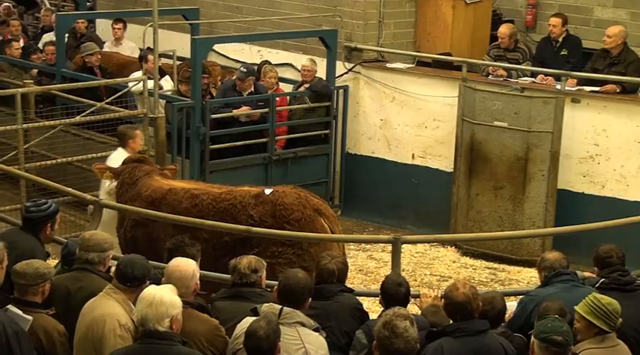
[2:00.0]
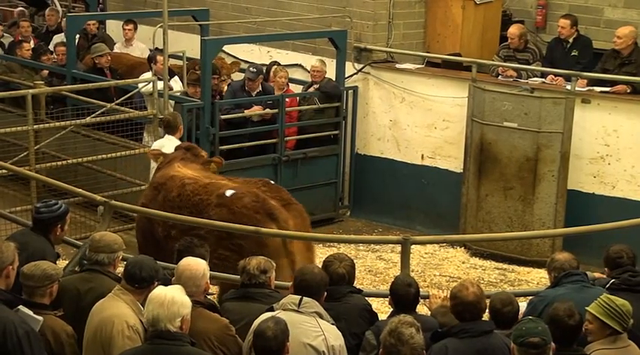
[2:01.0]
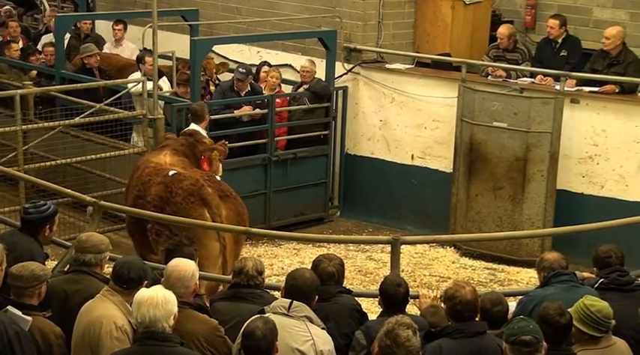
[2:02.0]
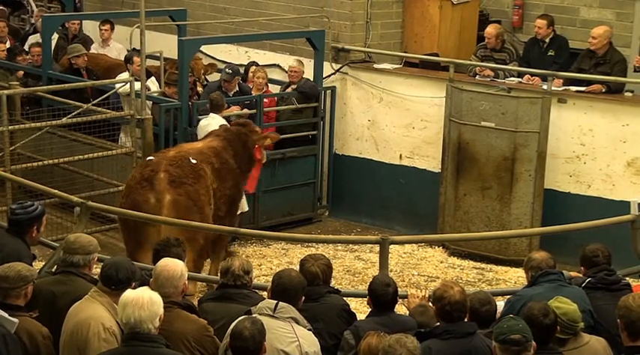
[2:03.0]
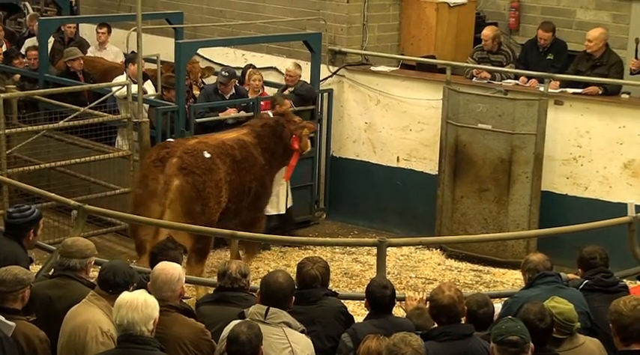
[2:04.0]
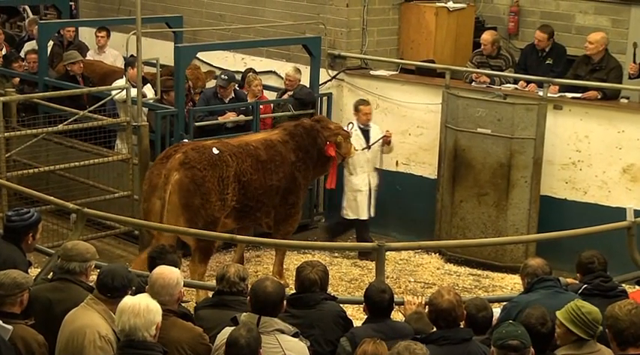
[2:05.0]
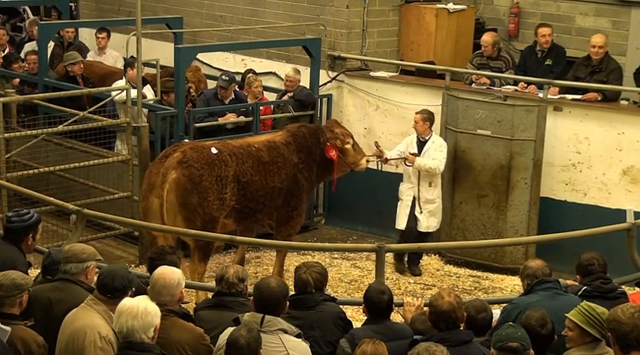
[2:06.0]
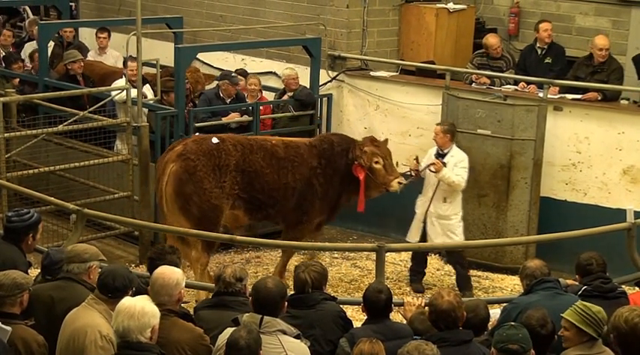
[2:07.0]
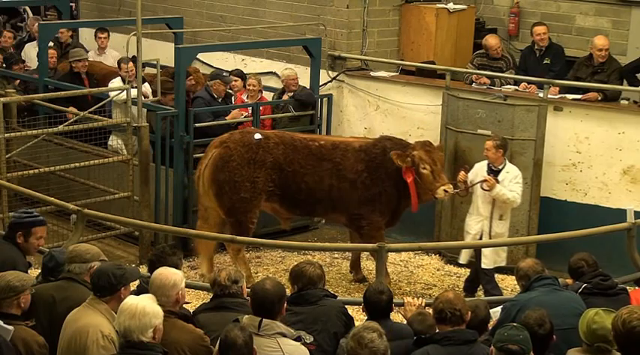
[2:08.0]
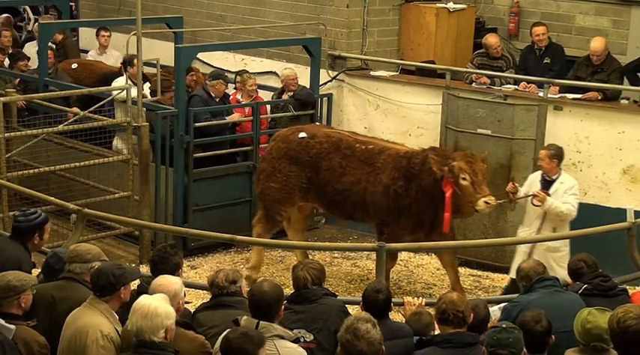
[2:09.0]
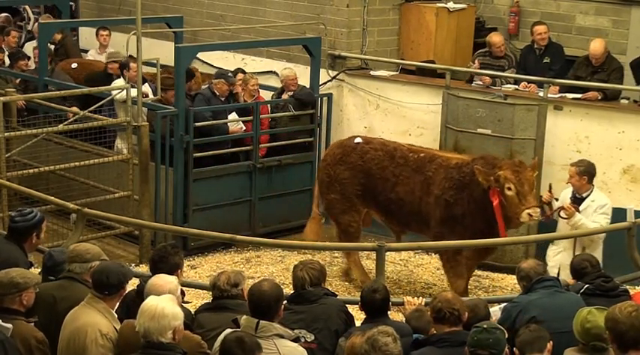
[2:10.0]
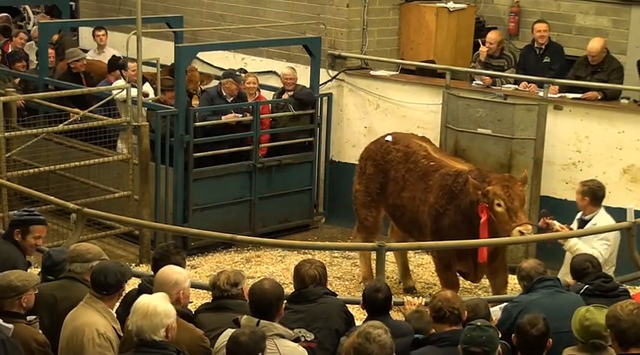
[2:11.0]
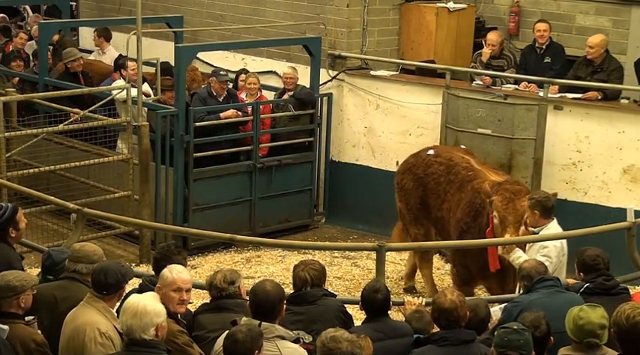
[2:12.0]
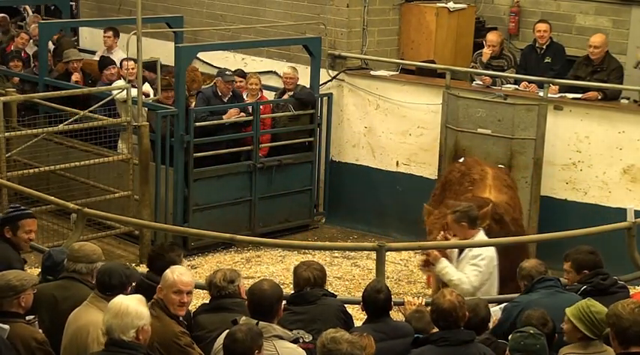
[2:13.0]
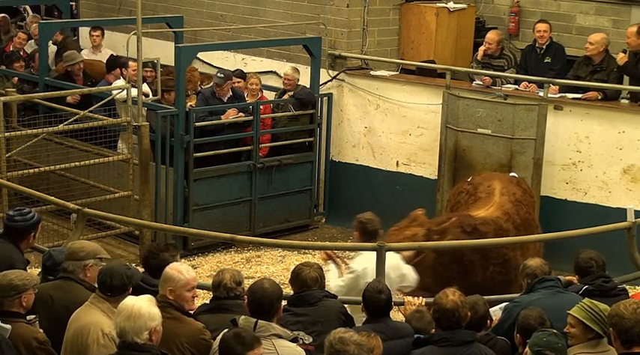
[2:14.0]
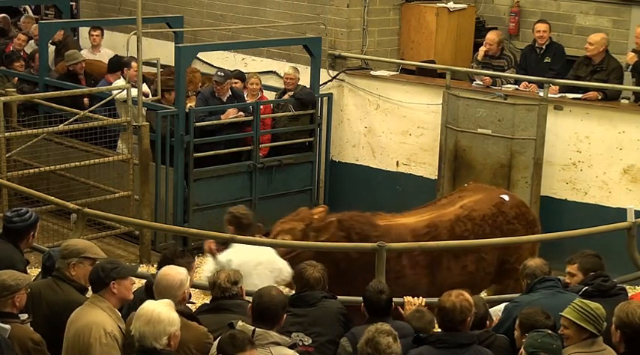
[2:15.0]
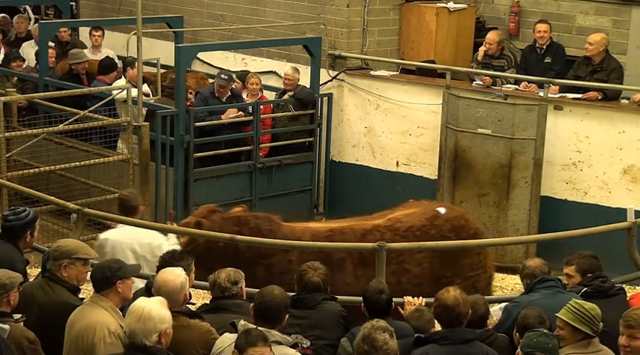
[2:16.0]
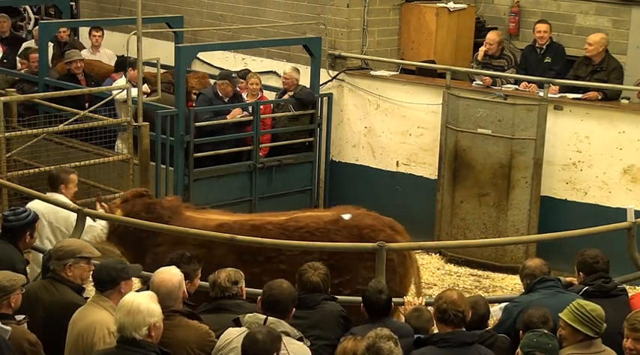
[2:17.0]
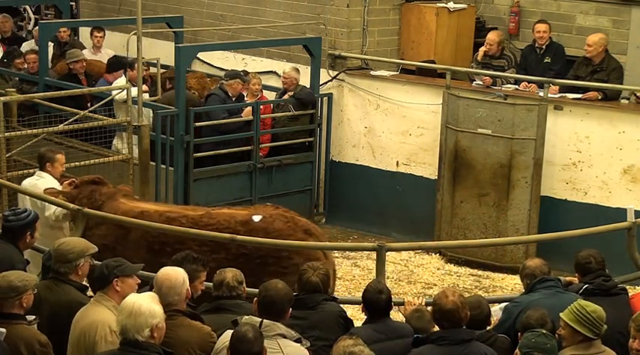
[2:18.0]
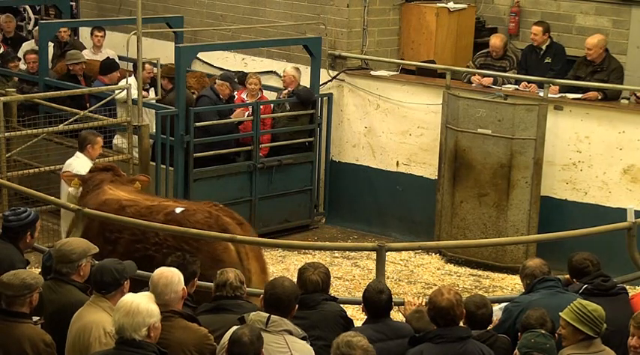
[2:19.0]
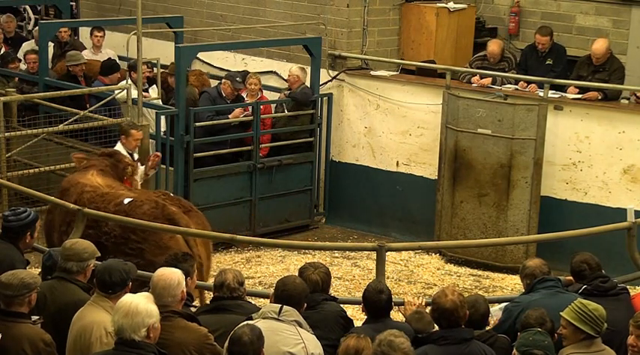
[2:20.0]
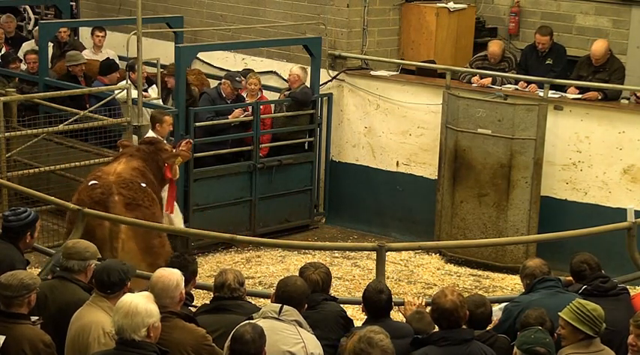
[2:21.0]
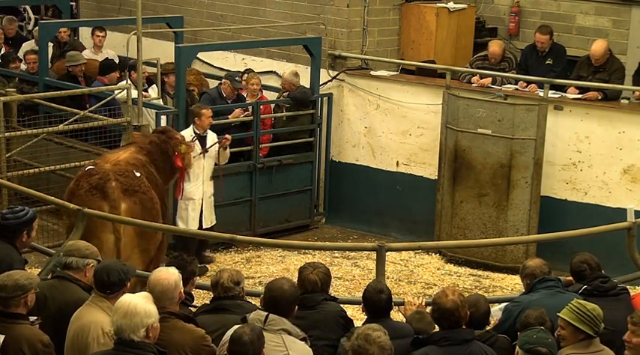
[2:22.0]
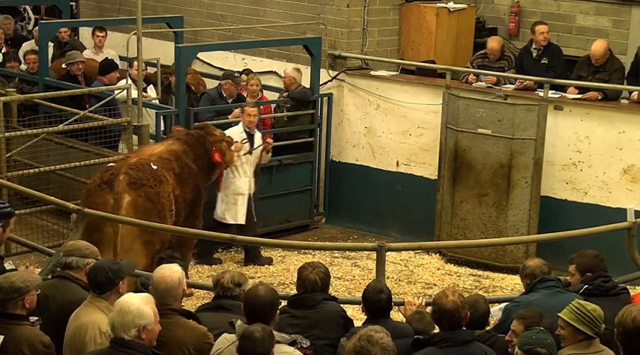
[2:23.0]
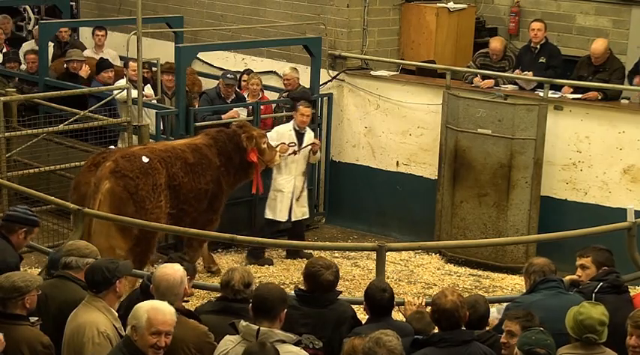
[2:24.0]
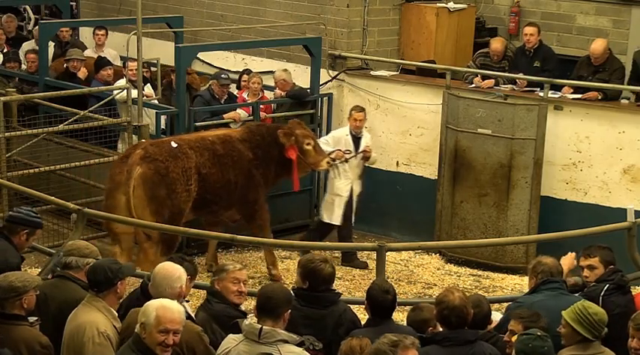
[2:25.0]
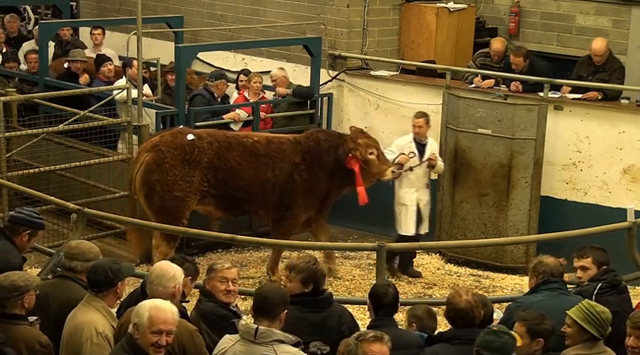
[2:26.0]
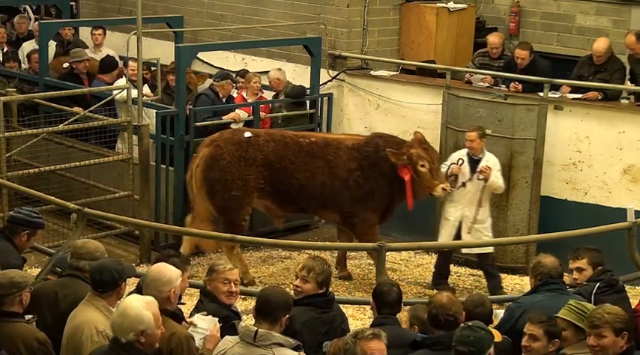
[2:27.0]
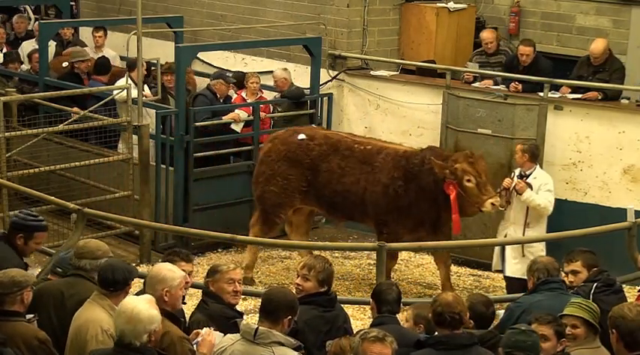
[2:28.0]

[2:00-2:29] The same cow is walked around in circles. Its tail twitches some, and it seems to pull back a little or walk more slowly. A red ribbon is attached to the right side of its head. It has two white things implanted in the tops of its haunches and a stripe of fur missing down its back. Only one man in a white coat leads it around. Up above, three men sit at a table; they may be judges or auctioneers, and the red ribbon may have come from them. Tons of spectators watch, wearing hats and coats, suggesting it is cold. The cow does not seem as energetic as earlier, but it cooperates and does not fight; it is just slow. It stops occasionally but comes along when given a little pull, and it does not seem threatening.